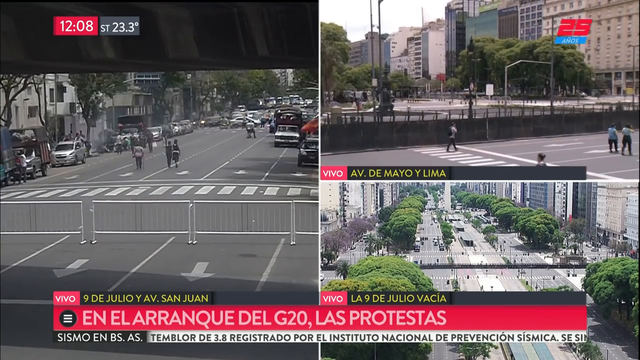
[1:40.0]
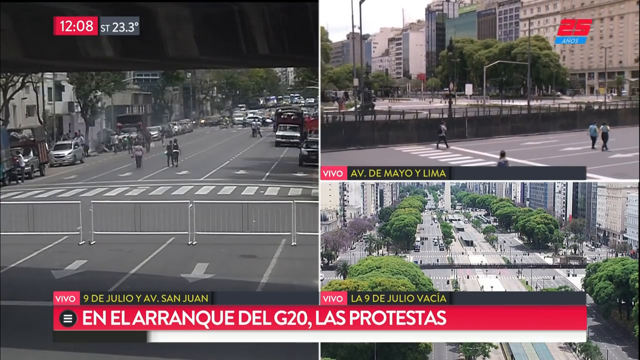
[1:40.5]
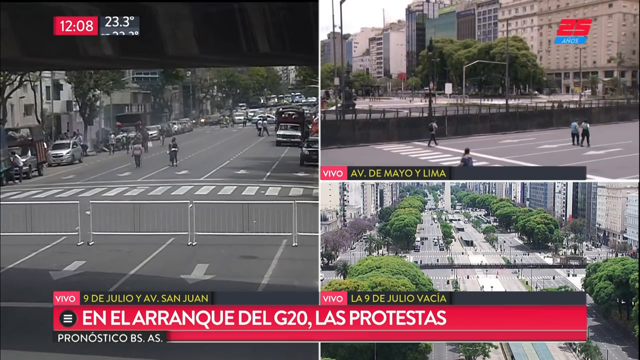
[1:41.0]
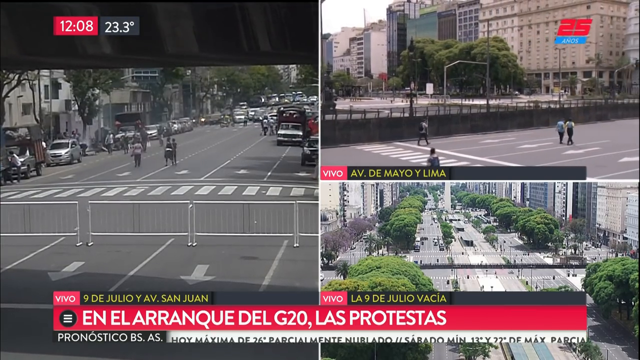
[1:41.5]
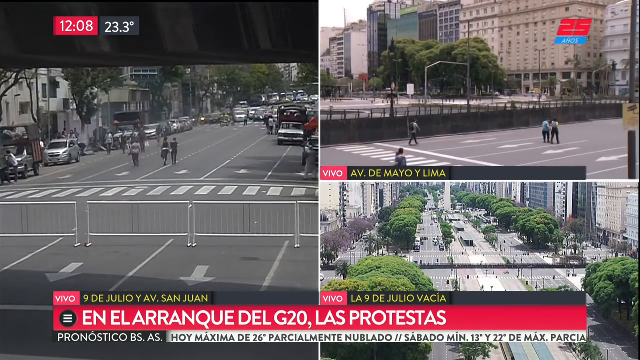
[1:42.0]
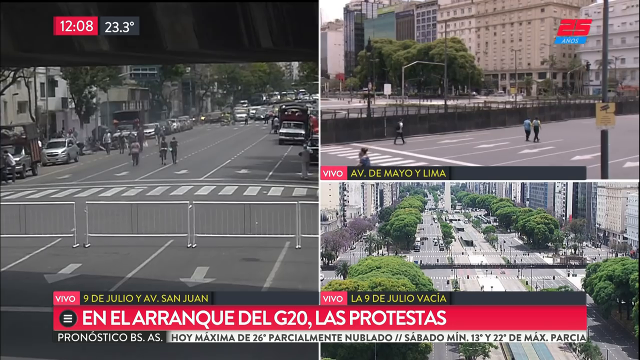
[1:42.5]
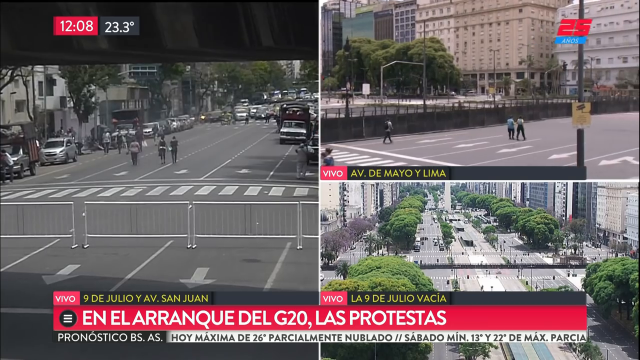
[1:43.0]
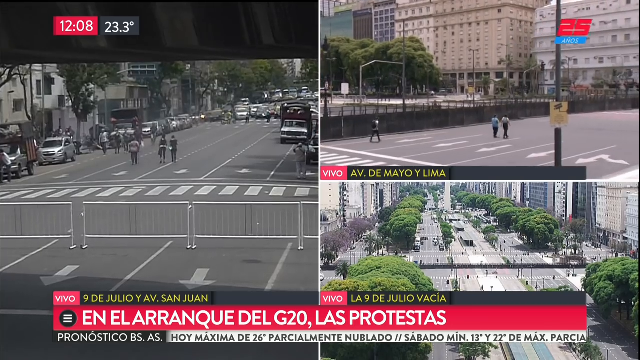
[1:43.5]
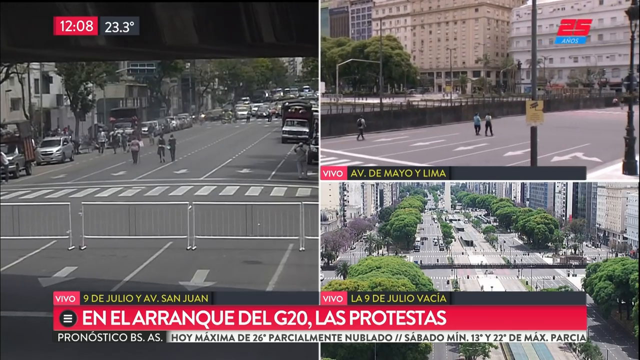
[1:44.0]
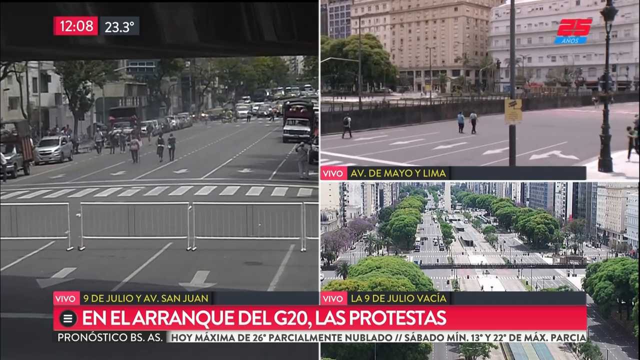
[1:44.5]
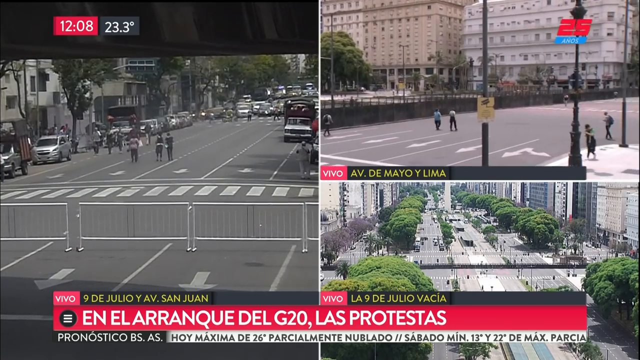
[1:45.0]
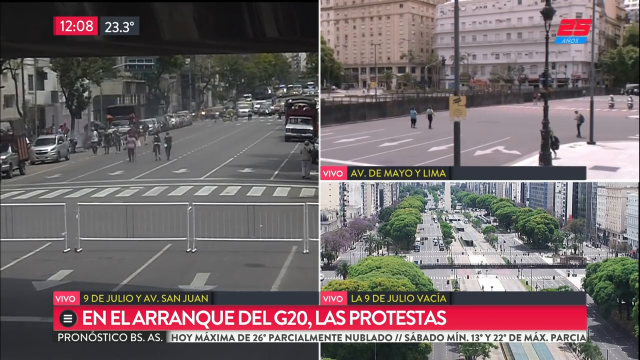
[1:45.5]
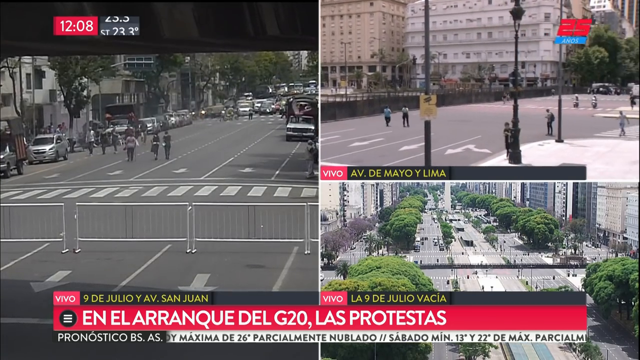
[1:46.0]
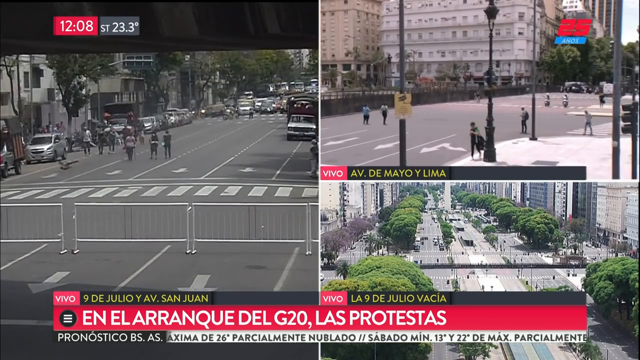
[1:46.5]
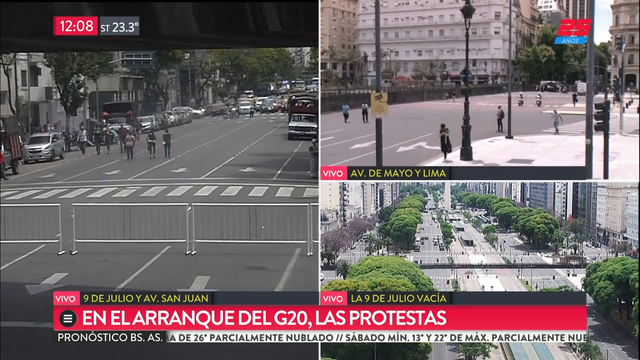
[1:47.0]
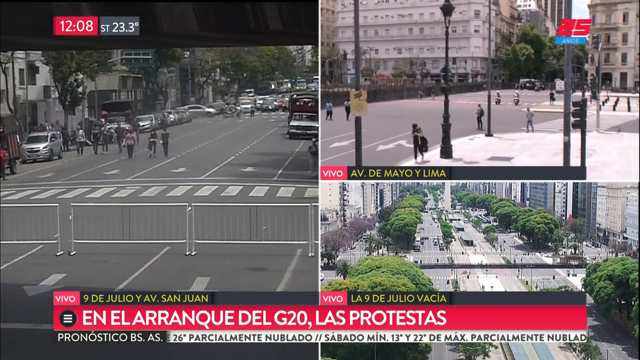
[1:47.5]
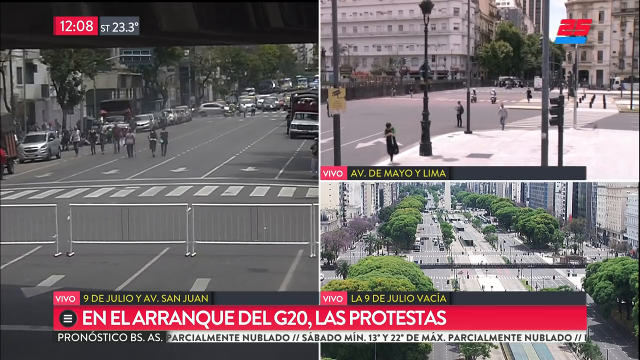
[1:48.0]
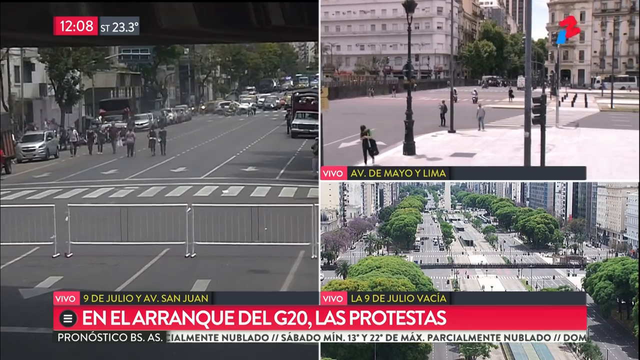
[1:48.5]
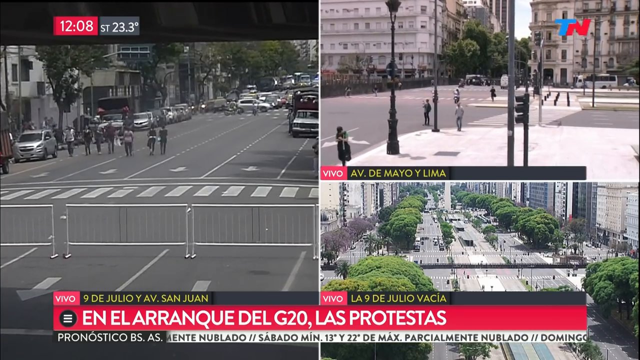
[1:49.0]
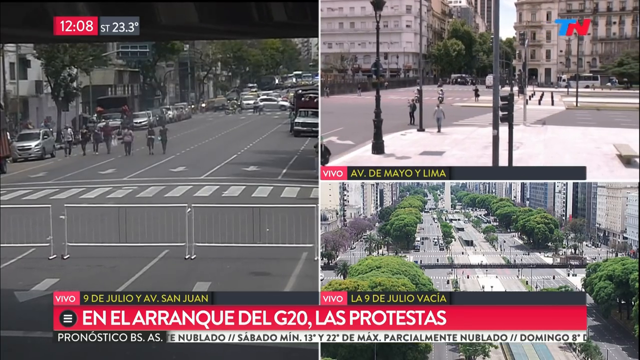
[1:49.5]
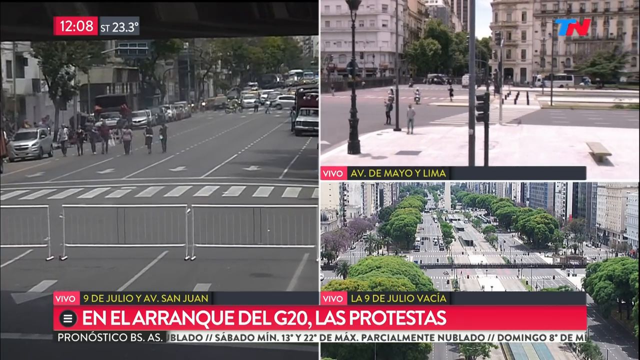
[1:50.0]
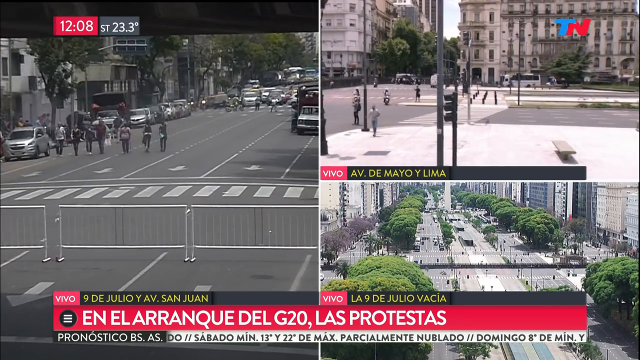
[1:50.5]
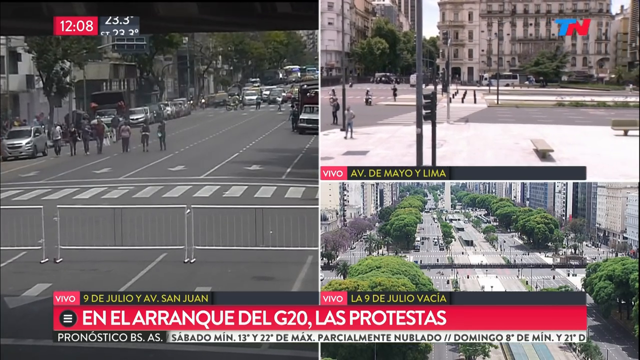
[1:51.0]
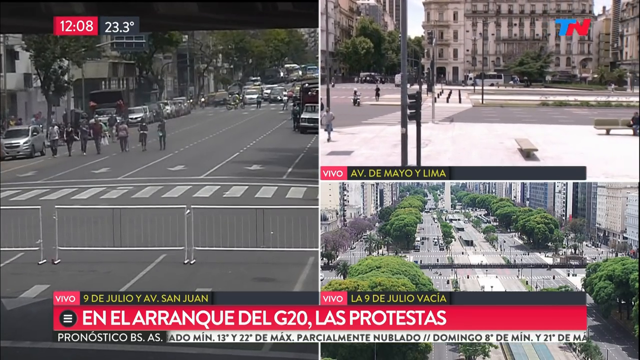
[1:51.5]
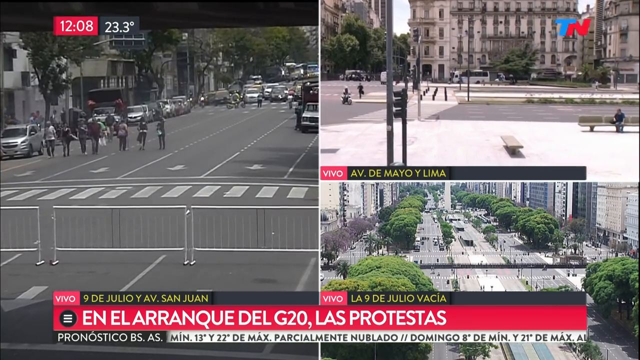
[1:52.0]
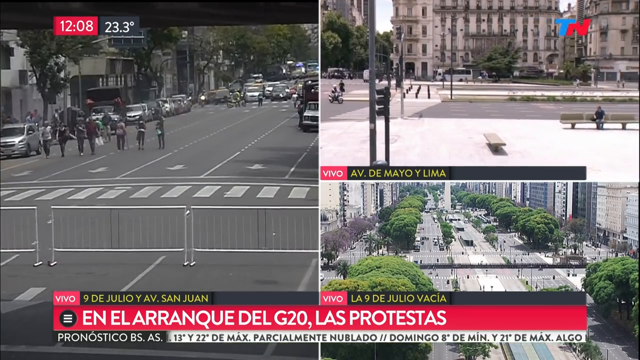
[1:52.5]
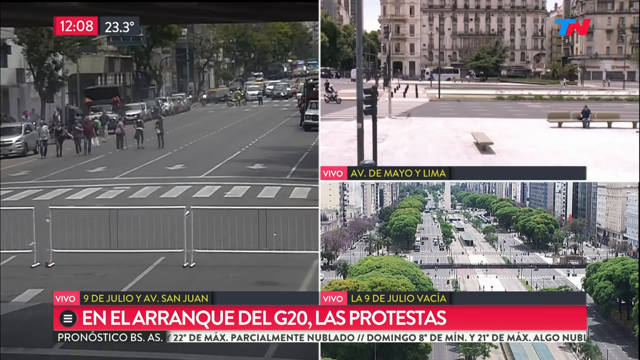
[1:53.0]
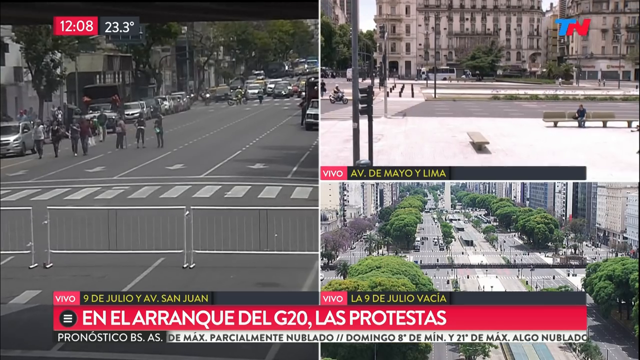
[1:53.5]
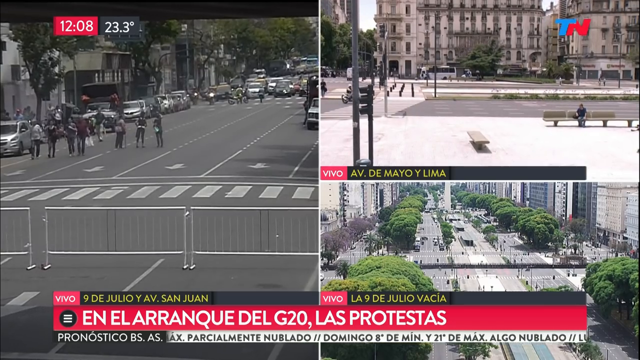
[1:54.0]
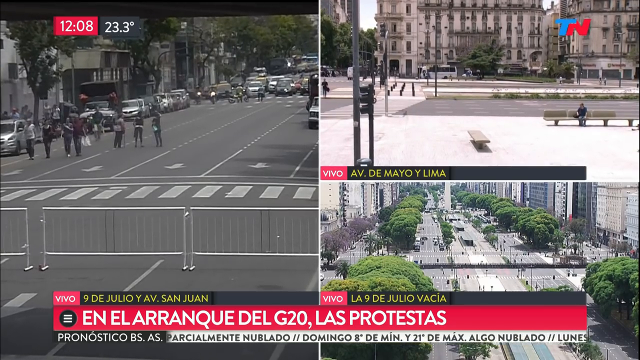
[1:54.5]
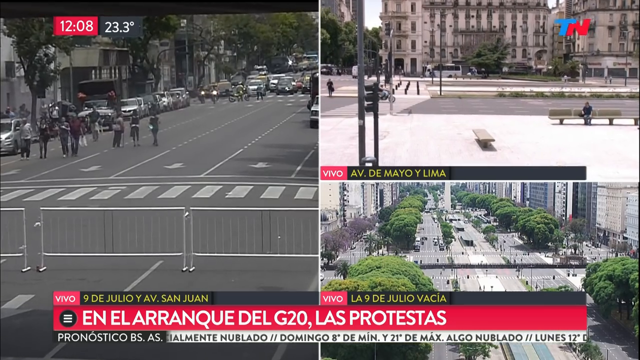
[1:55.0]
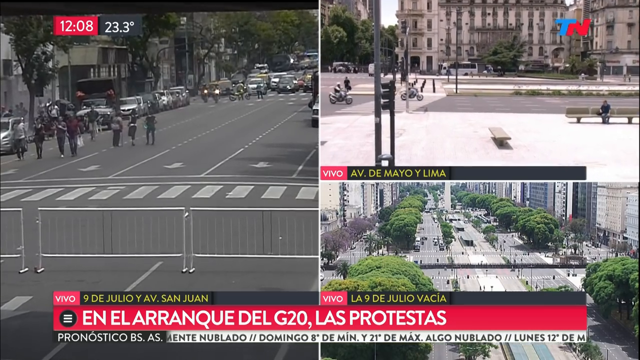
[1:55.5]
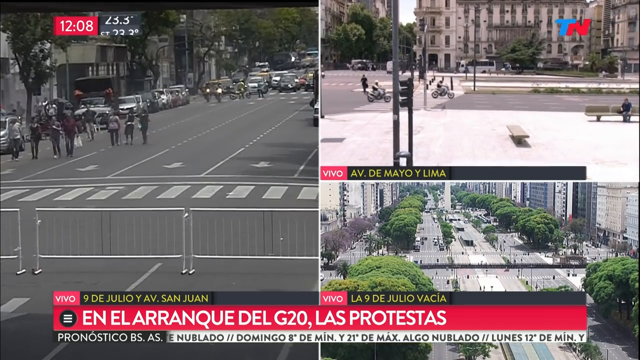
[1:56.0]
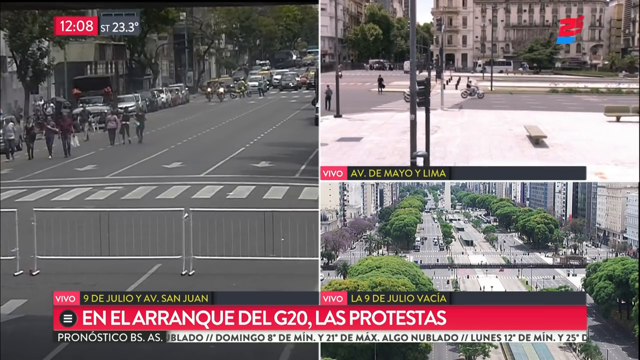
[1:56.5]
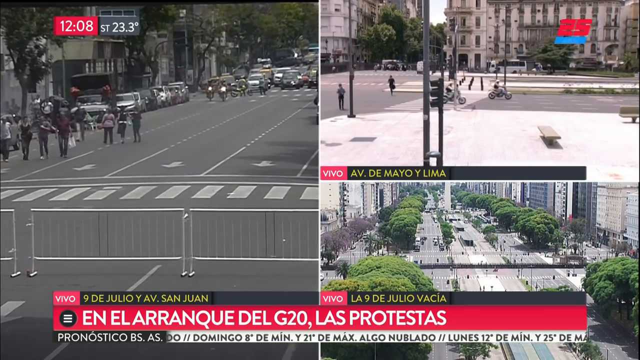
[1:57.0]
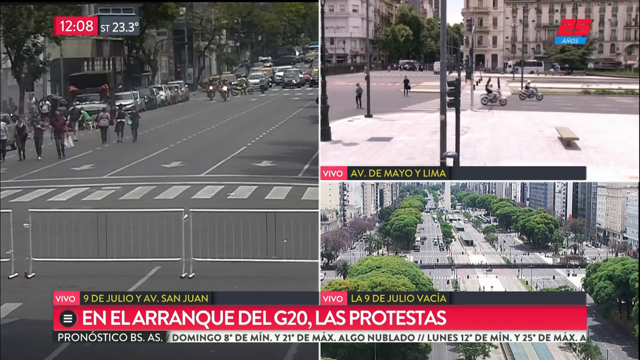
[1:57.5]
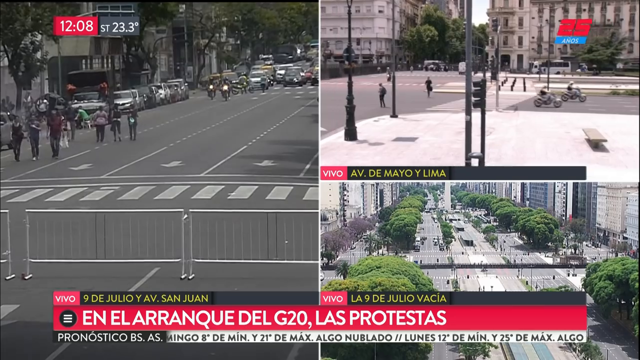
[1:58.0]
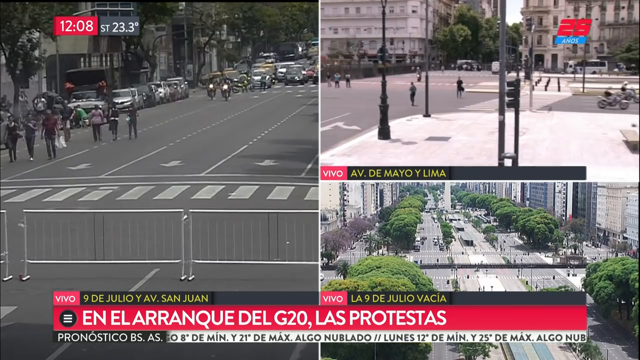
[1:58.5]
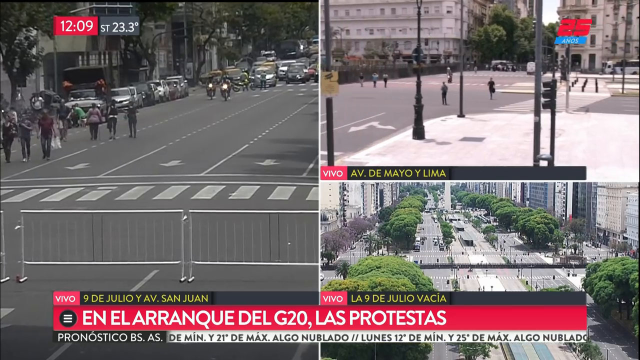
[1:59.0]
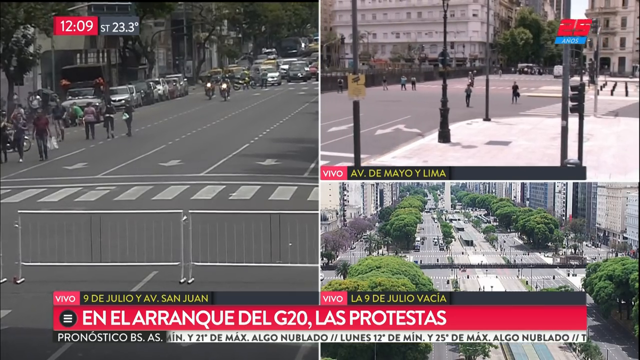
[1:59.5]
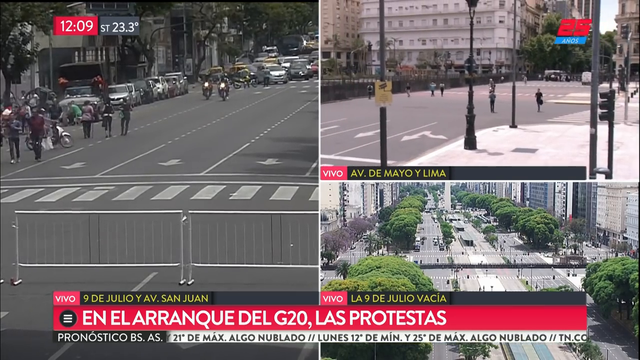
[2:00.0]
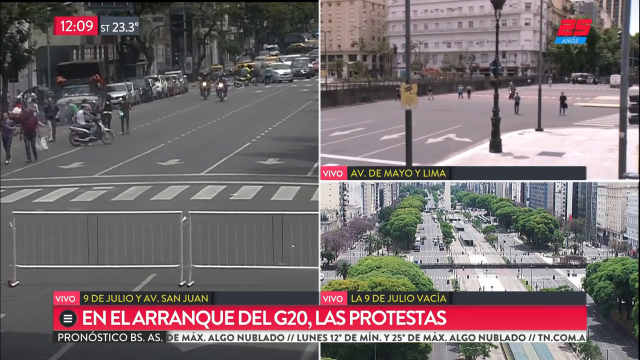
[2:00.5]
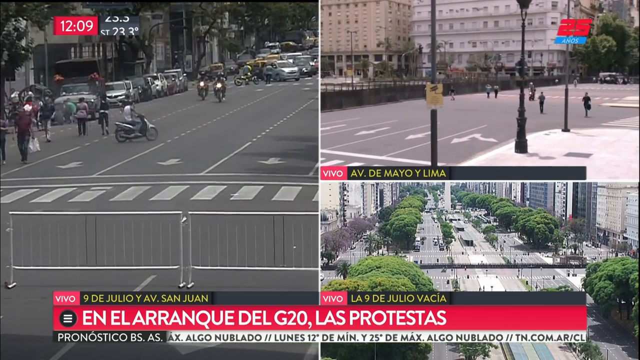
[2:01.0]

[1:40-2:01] Three street views are on screen: a large rectangle on the left, and on the right another large, upright rectangle split in half. The left view shows a crosswalk, gates cutting off an area, and arrows in columns on the street pointing toward the viewer. Several people are in the street; it is not clear what is happening, but the traffic is being diverted across crossways. The top right image shows a walkway, people walking up the street, buildings in the background, trees, and a gate with a black screen at the bottom cutting off an area that cannot be made out. The bottom image shows trees and what appears to be a big city, with not many cars on the road, especially on the right side, and a couple of cars on the left. People walk in each screen except the bottom right, where there is little movement apart from one small car going sideways across the street. On the left, a crowd of people walks and a motorcycle comes through, and at the top people walk in the middle of the street.